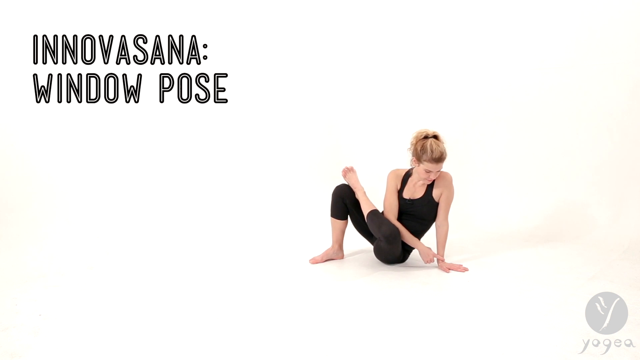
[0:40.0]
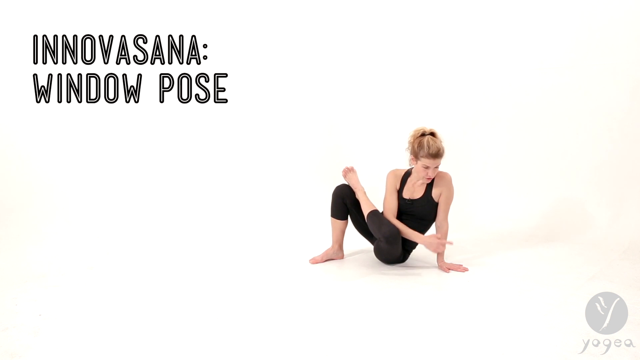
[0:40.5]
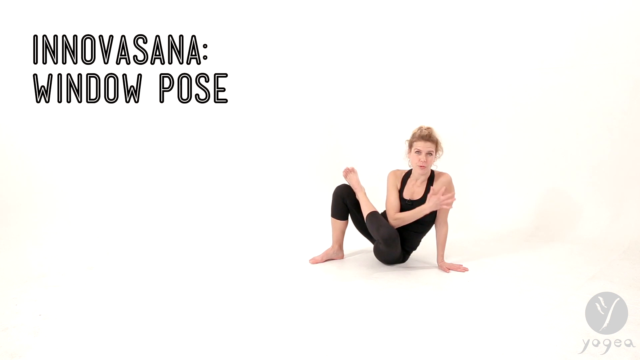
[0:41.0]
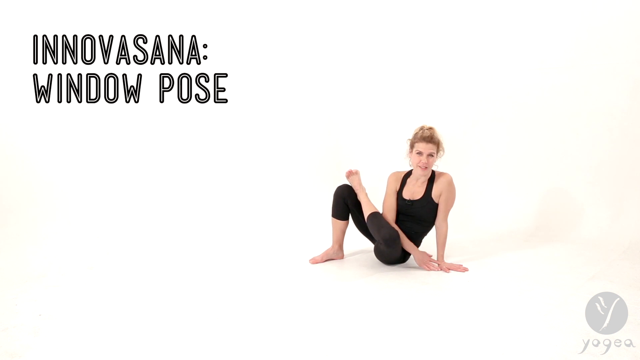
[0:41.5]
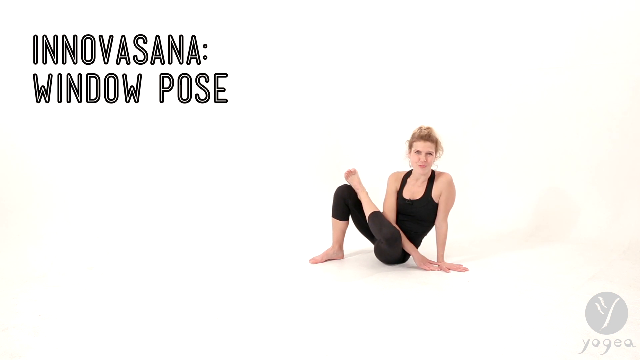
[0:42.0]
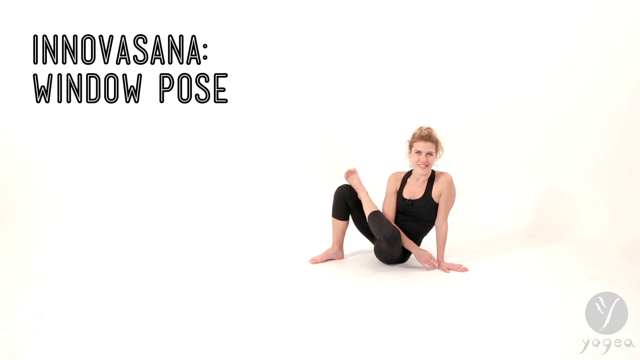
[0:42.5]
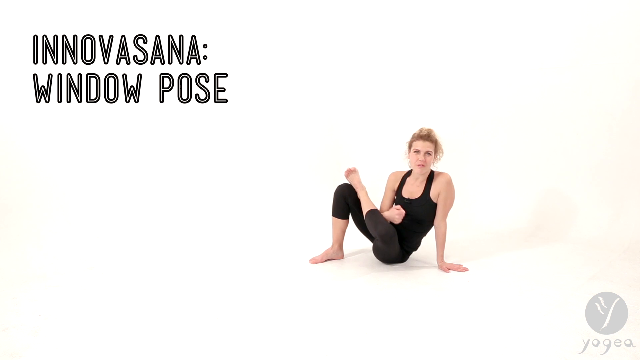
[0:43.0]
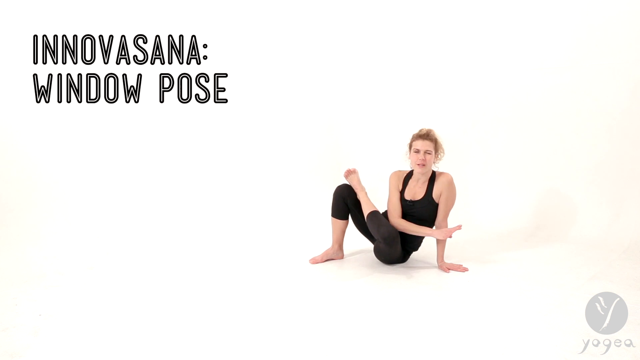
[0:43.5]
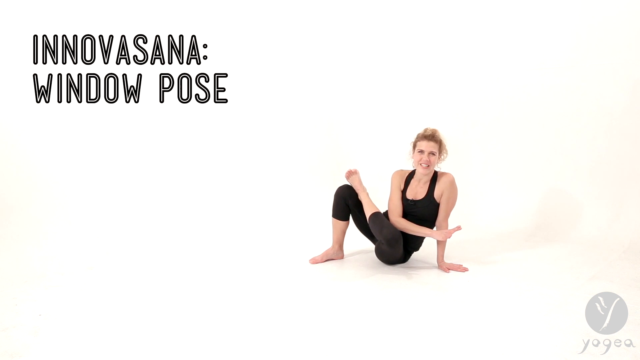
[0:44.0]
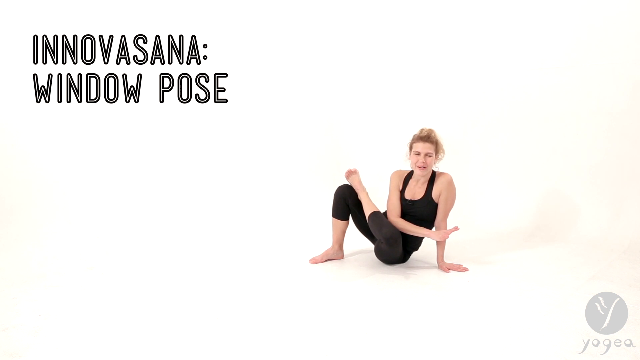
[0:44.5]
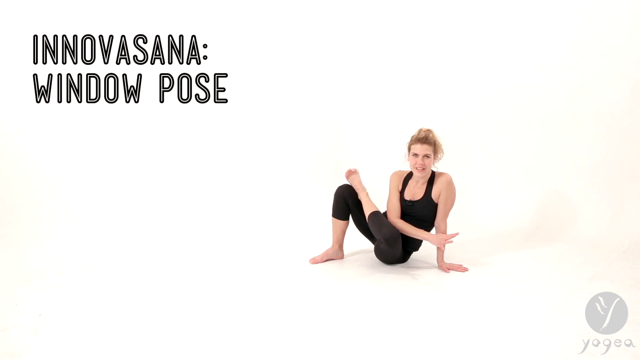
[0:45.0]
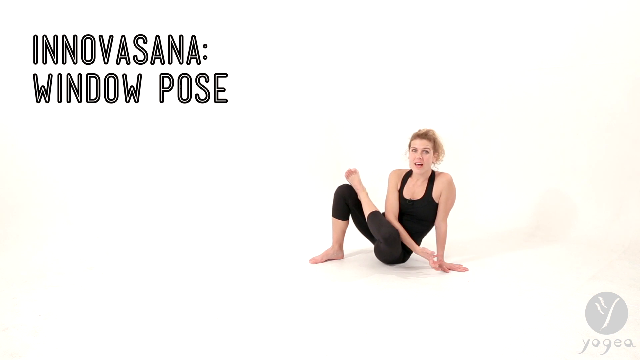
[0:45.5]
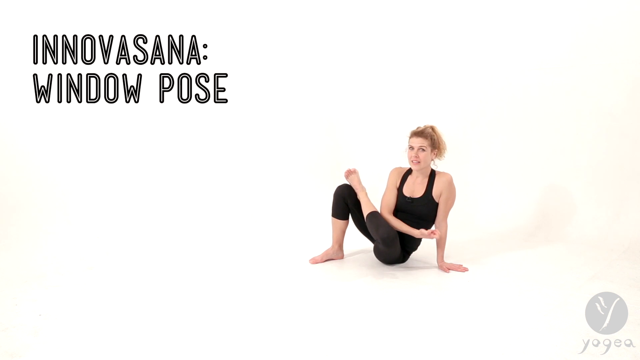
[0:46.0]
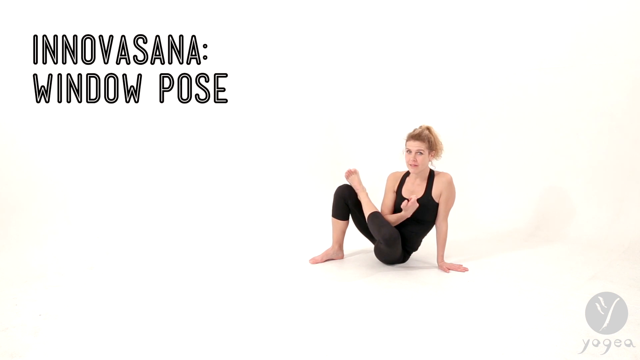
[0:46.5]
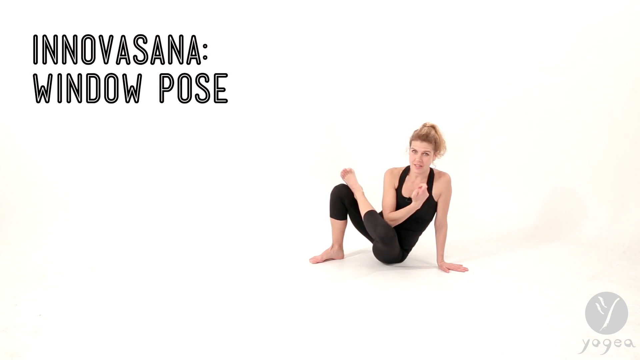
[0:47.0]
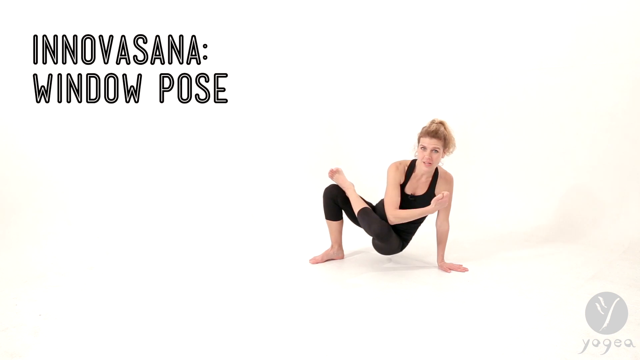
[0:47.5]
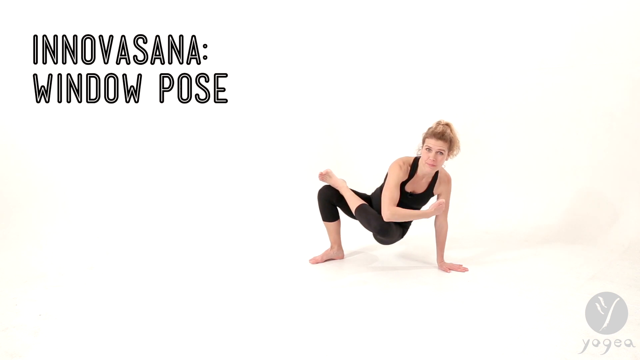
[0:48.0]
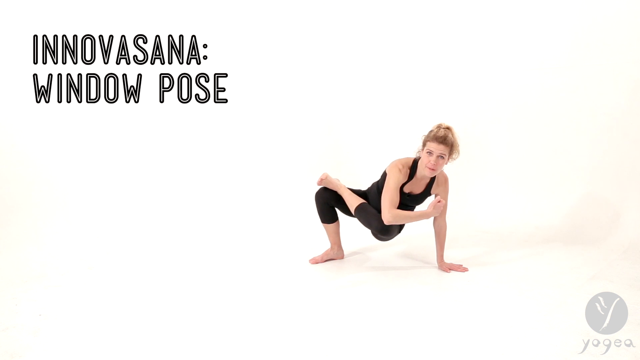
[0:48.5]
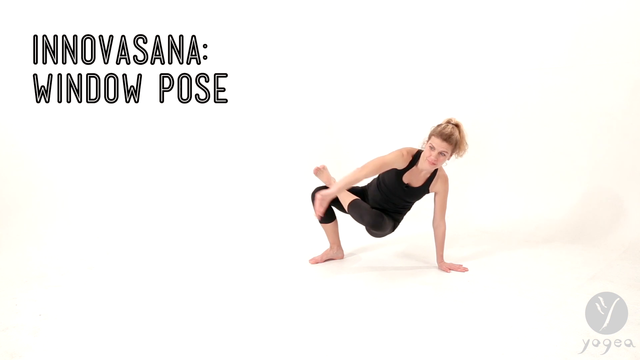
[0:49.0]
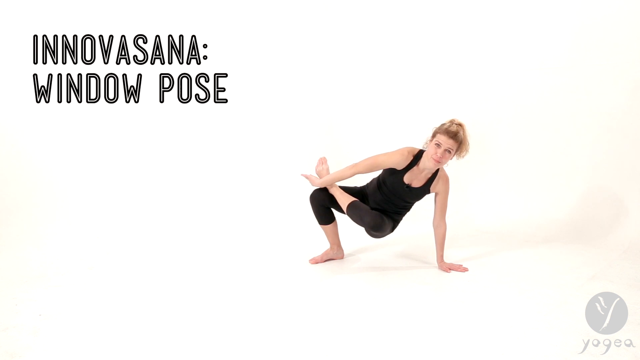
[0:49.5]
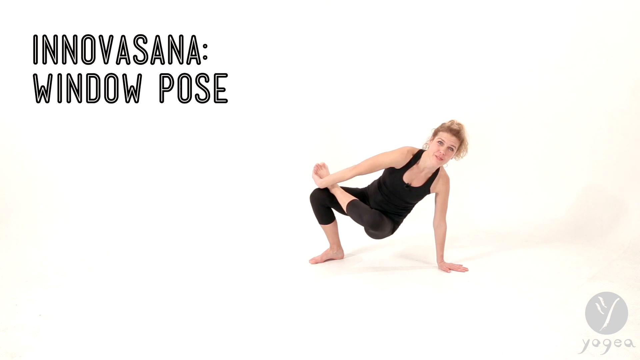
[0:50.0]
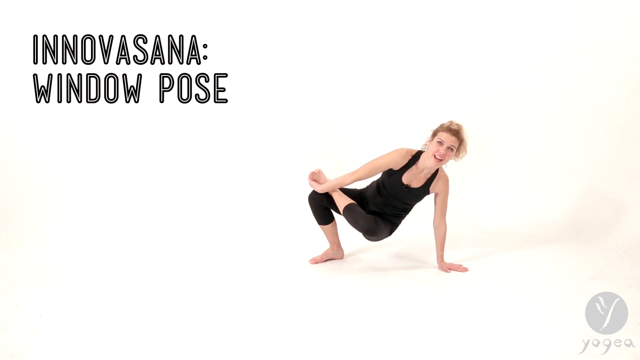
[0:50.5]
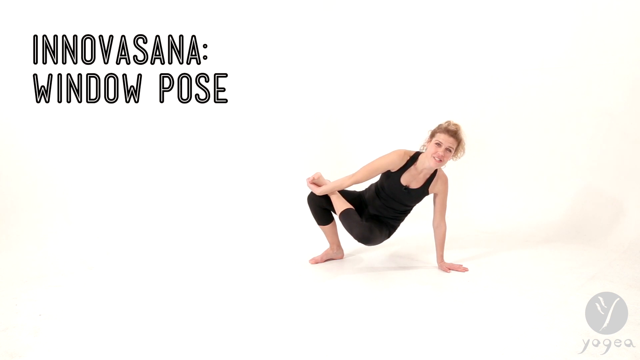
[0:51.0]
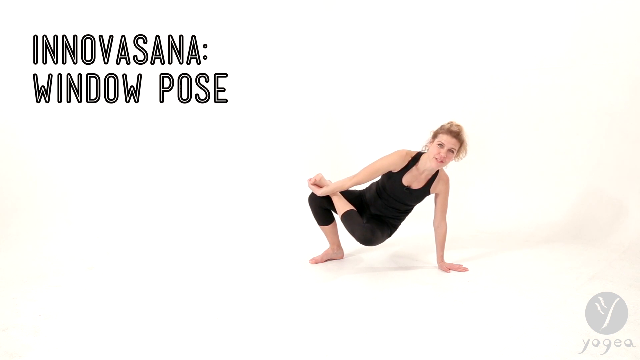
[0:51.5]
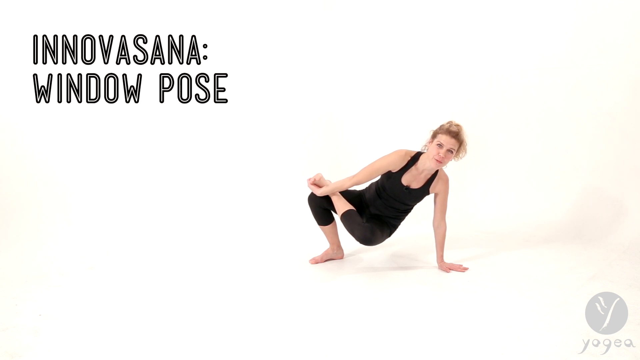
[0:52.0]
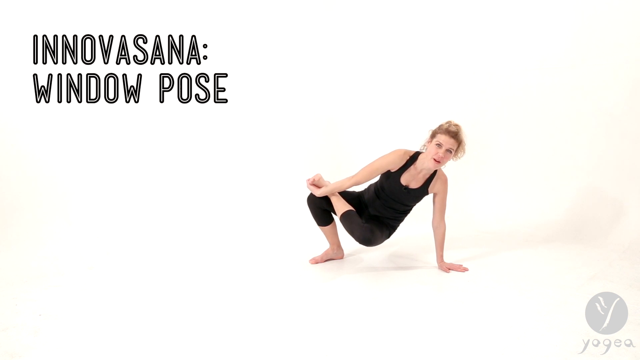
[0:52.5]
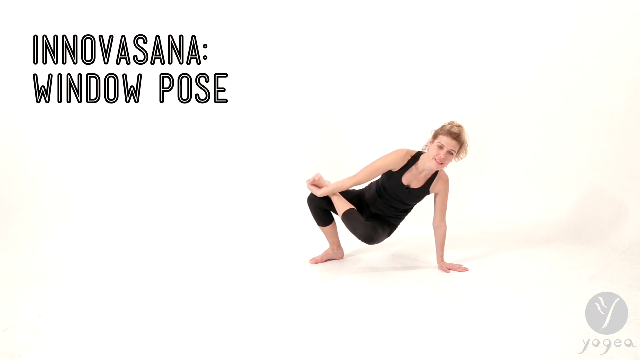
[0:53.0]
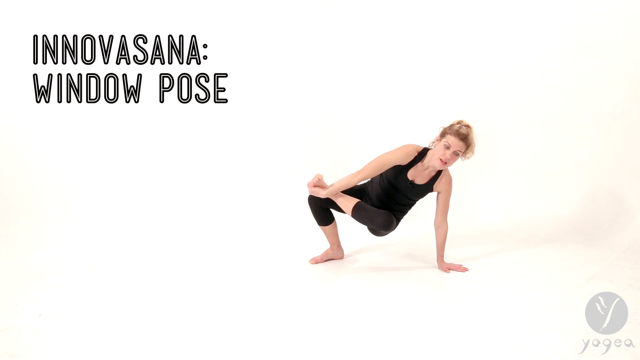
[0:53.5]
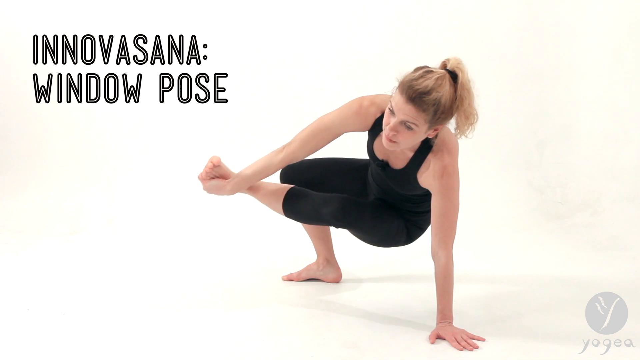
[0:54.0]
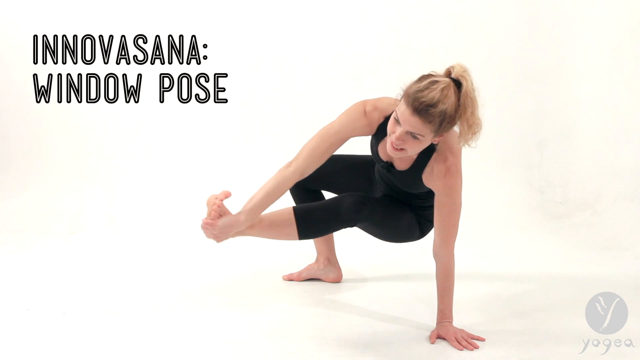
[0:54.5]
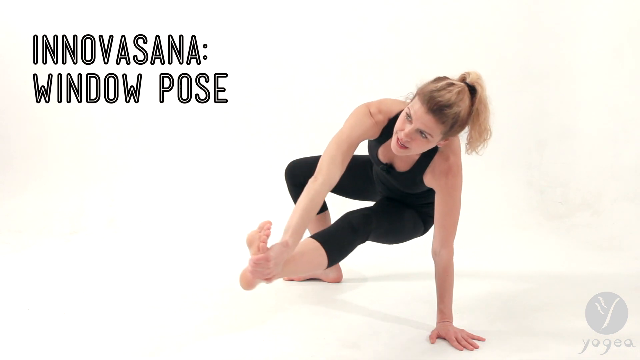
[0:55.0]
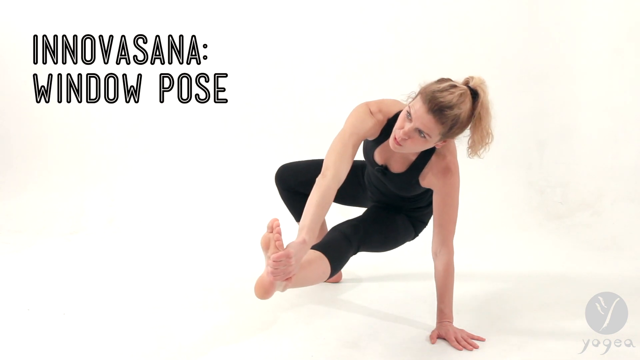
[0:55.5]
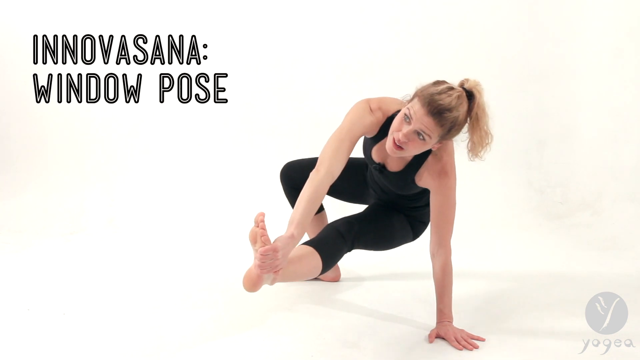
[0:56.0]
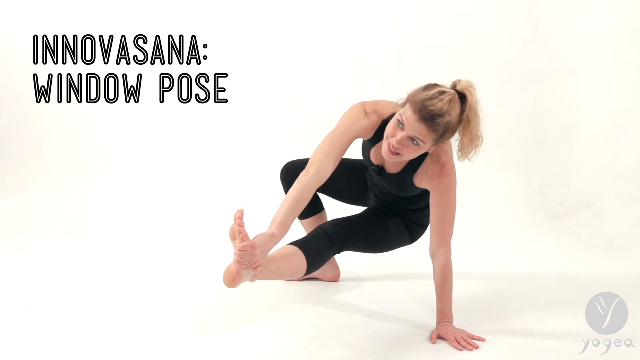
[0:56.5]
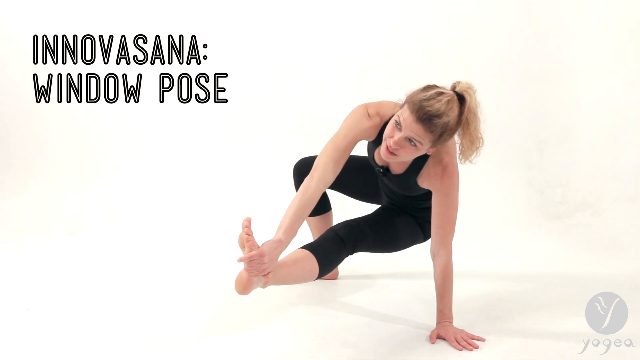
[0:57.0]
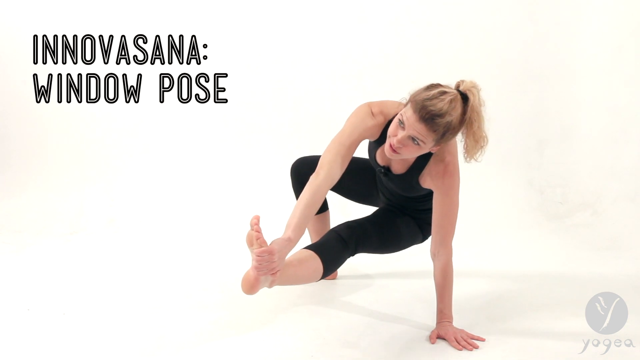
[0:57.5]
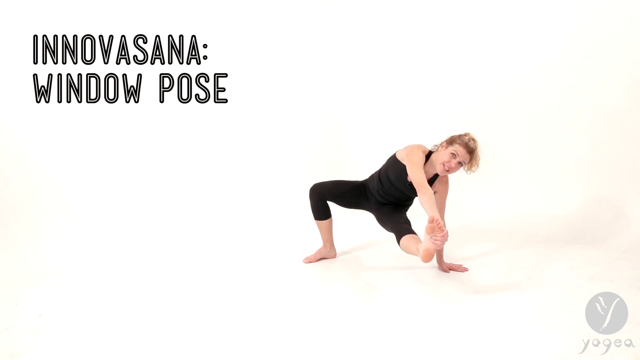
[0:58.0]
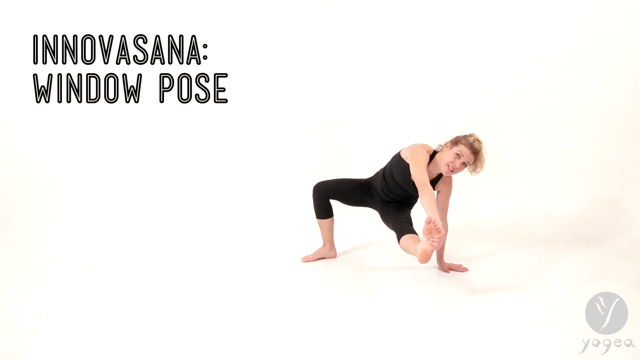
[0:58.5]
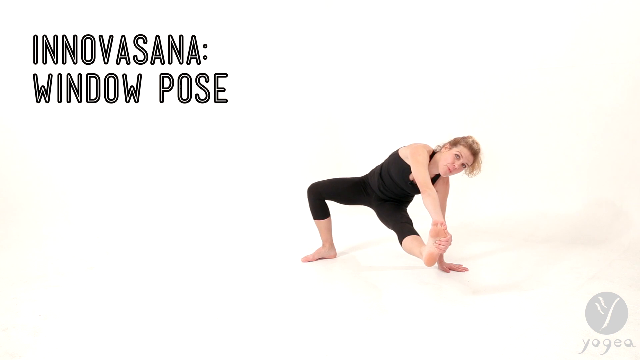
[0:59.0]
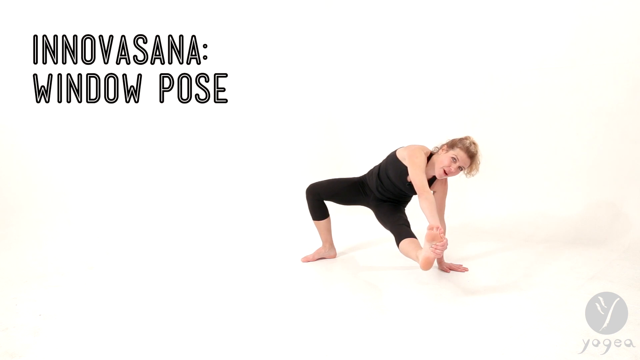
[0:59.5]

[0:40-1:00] A woman sits on the ground in a black halter-neck top leotard, her blonde hair pulled up in a bun behind her head. In the upper left corner of the screen, text reads "Innovasana, window pose". Her left leg is bent at the knee with her left foot resting on her right knee. The palm of her left hand is placed on the ground to support her, and she gestures lightly with her right hand as she talks. She then pushes her body weight up, supporting her body with just her right foot, since her left foot is crossed over her right knee. She places her right hand over her left foot and holds it there, then uses her right hand to push her left foot out straight, holding on to it while supporting her body weight with her left hand. She maintains the position.